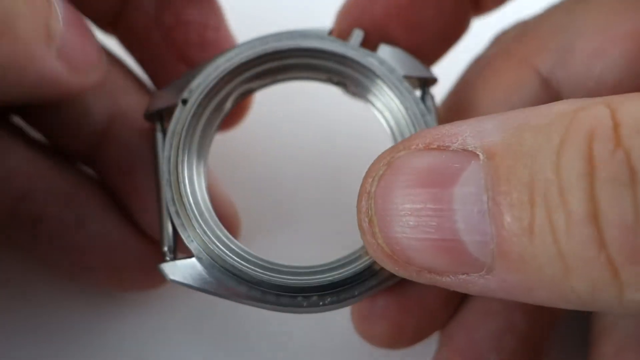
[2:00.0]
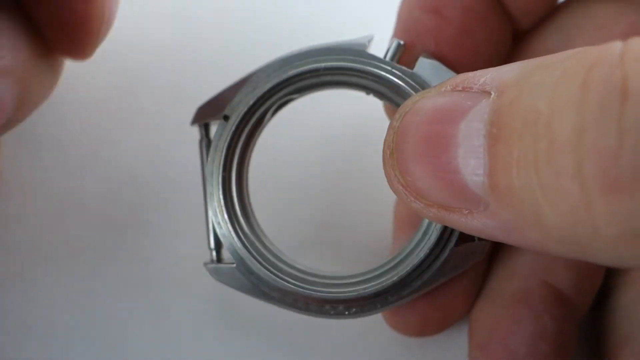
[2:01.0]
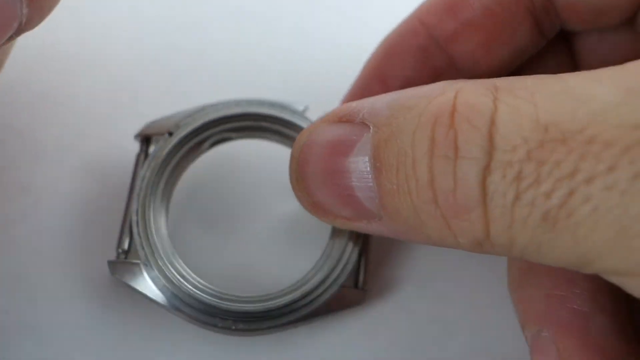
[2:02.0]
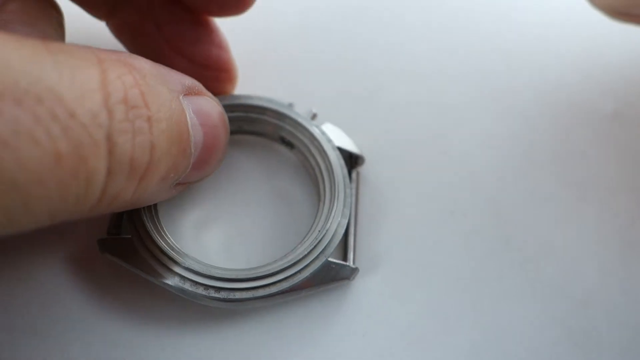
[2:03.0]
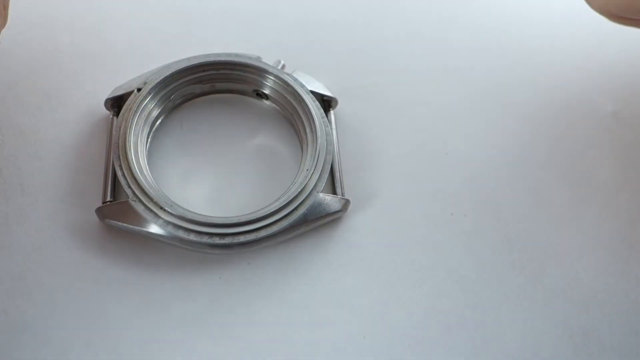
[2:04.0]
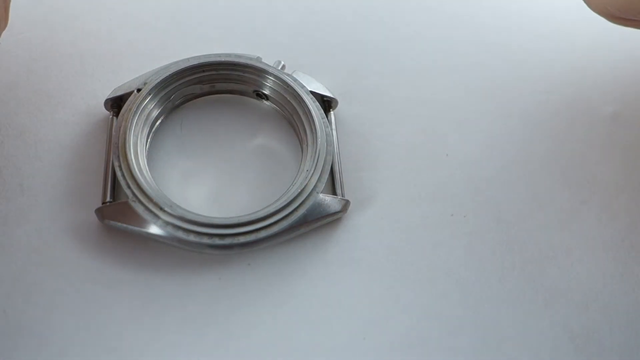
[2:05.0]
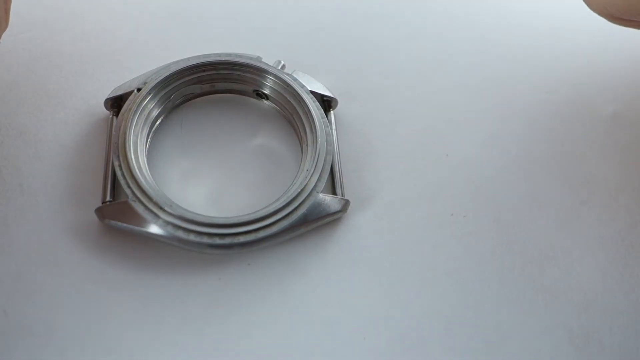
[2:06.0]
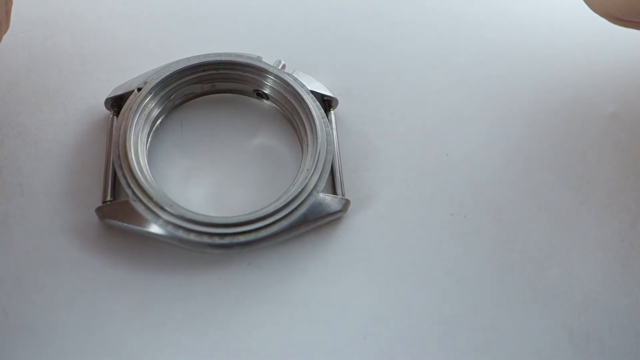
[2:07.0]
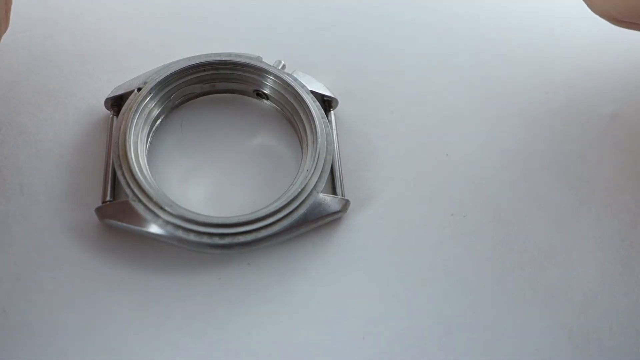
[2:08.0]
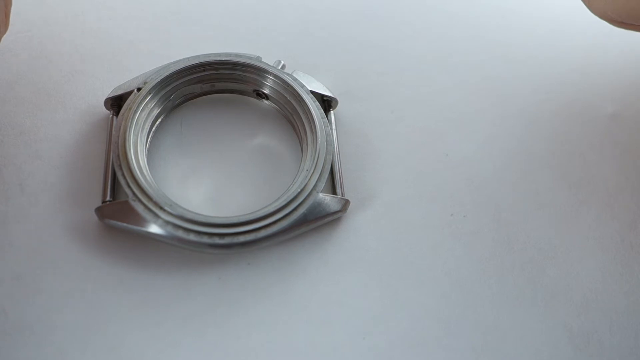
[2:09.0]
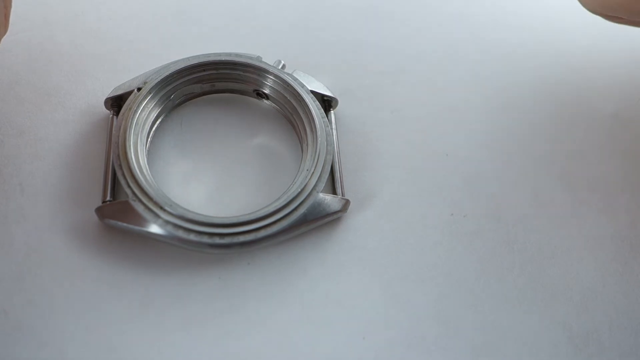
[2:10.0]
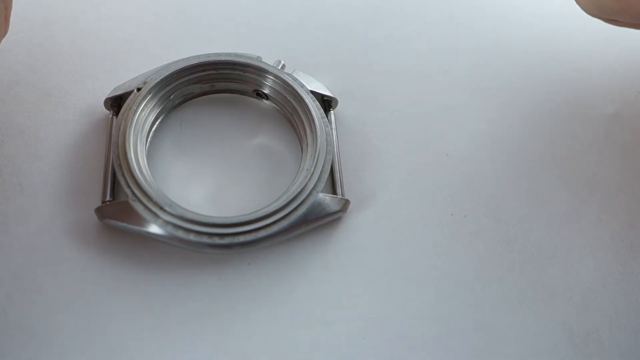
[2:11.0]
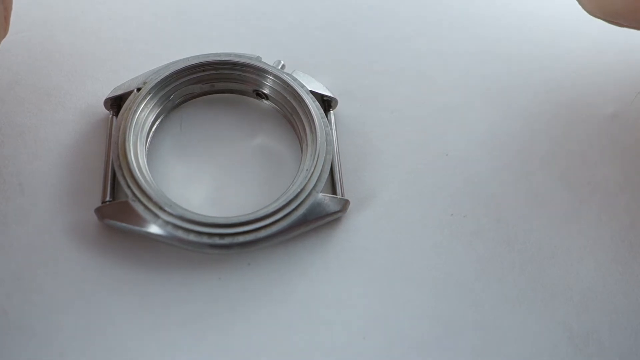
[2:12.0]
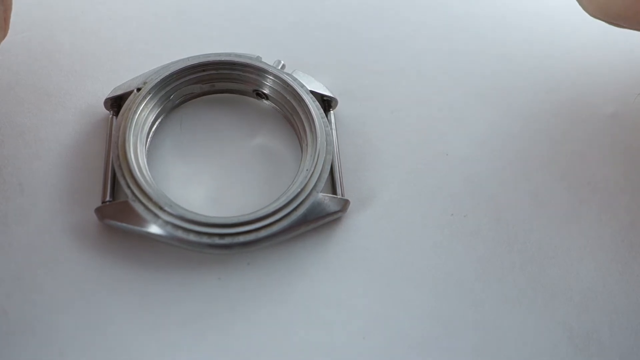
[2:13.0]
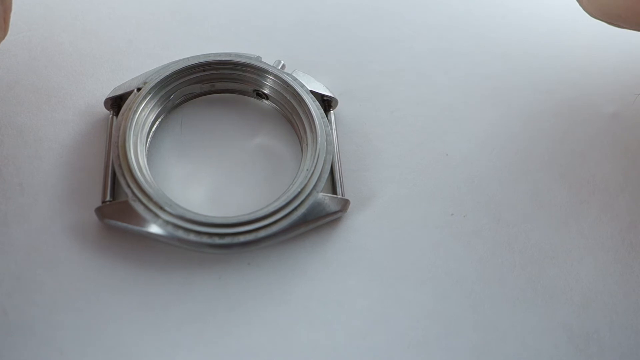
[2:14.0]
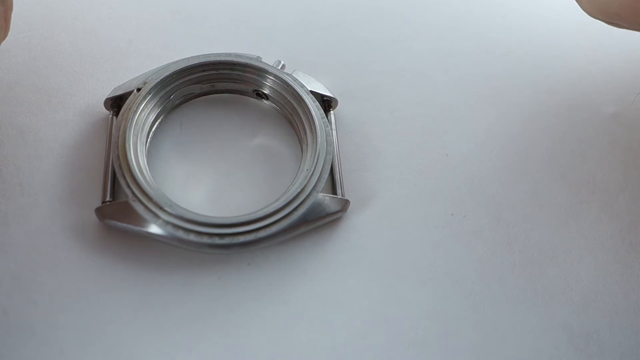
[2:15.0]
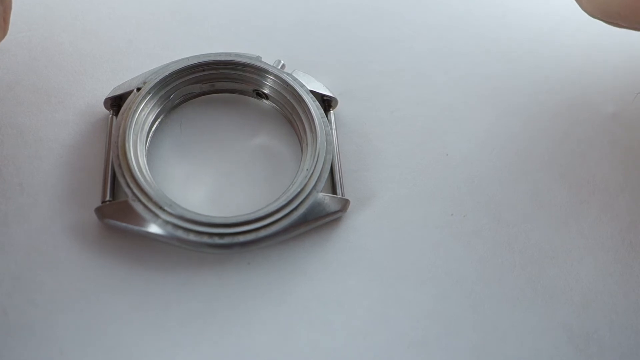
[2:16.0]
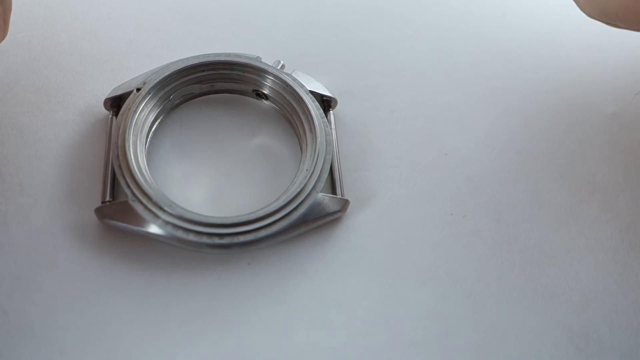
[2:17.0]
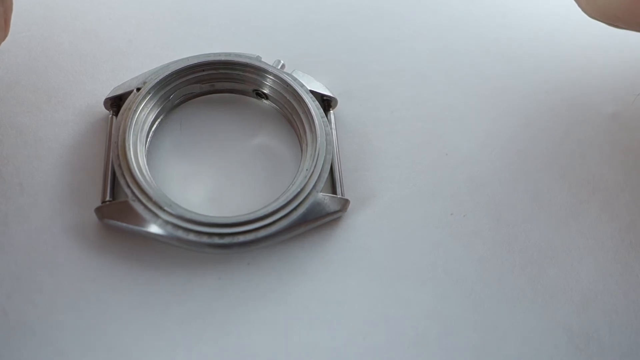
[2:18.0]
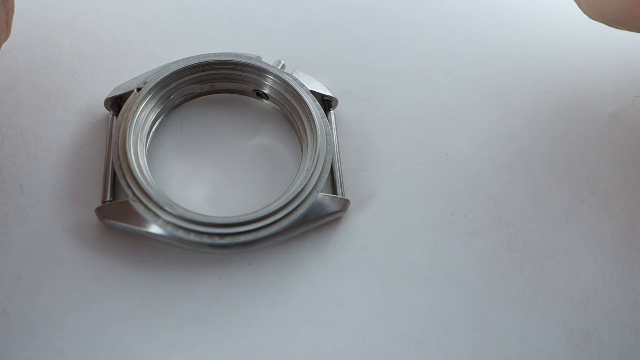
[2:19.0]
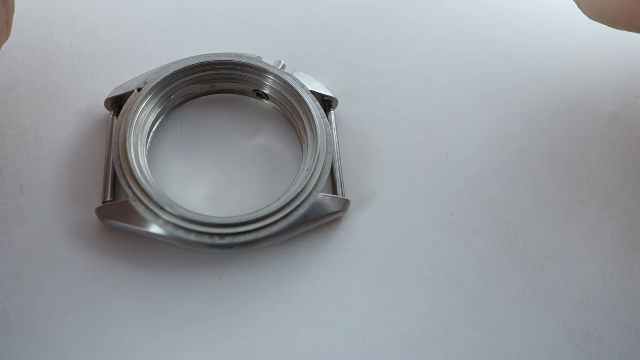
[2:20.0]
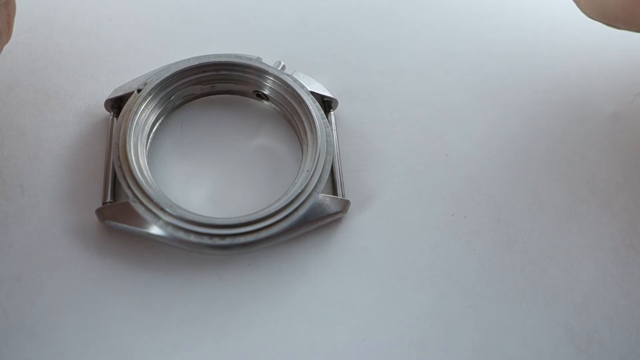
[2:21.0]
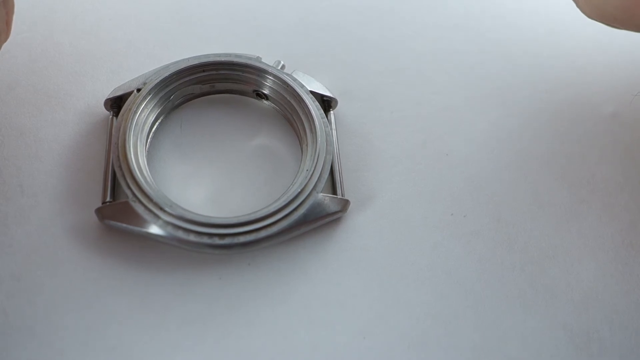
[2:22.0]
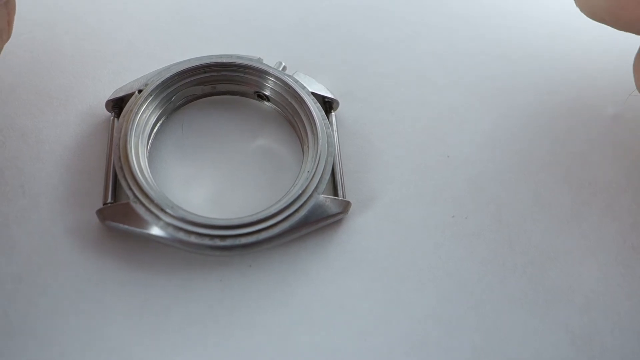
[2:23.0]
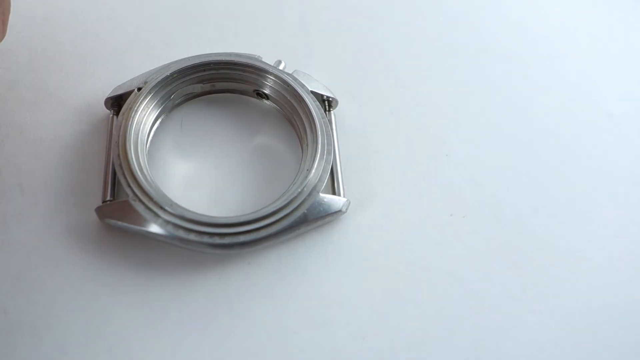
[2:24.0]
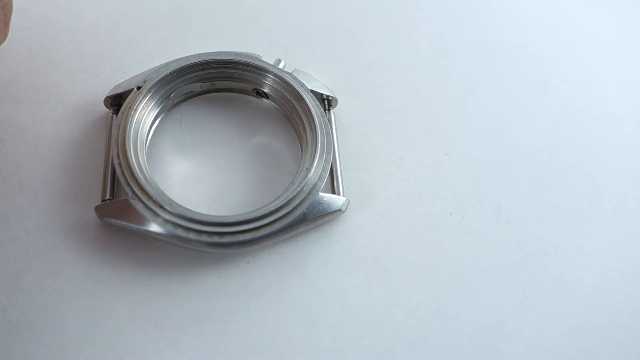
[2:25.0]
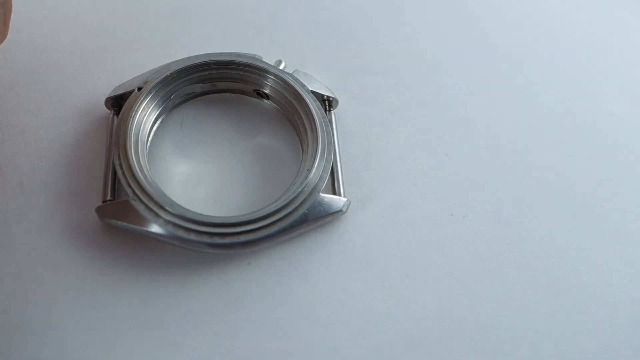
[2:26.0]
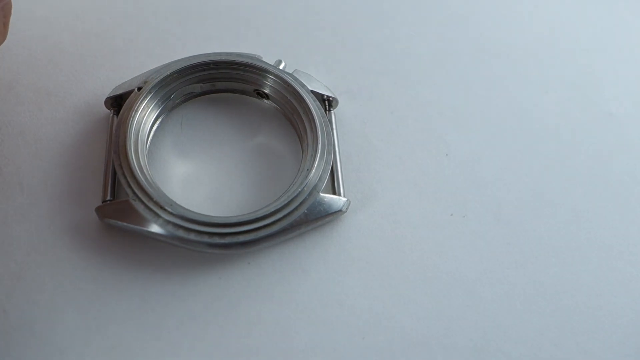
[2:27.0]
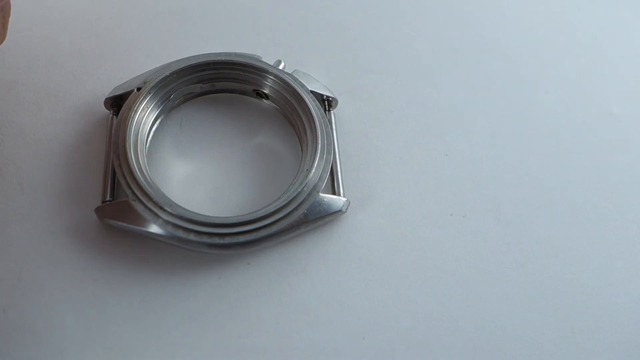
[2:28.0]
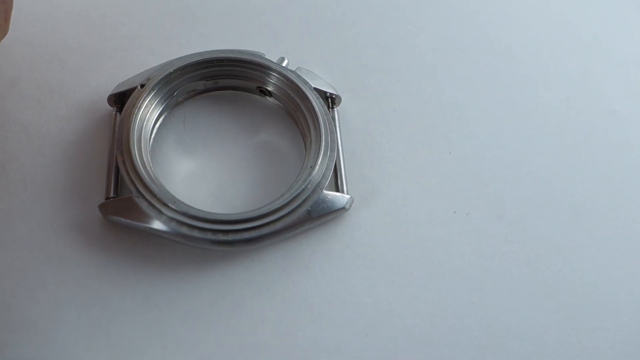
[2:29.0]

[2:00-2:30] Three fingers are in the top left-hand corner of the screen, with a thumb in the very top corner on the left. Two fingers are in the top right-hand corner, with a thumb coming from the middle right of the screen toward the middle. Both hands hold the watch face, then place it on a white desk. The left finger and thumb reach toward the left-hand side of the watch face, then the hand moves back toward the top left corner of the screen until it disappears. A white background remains, with the watch face on its own lying flat on the table toward the left-hand side of the screen.